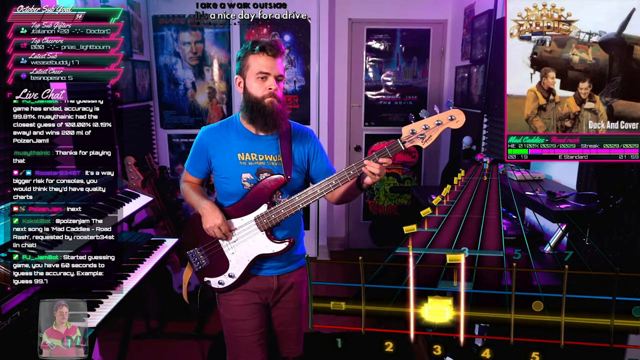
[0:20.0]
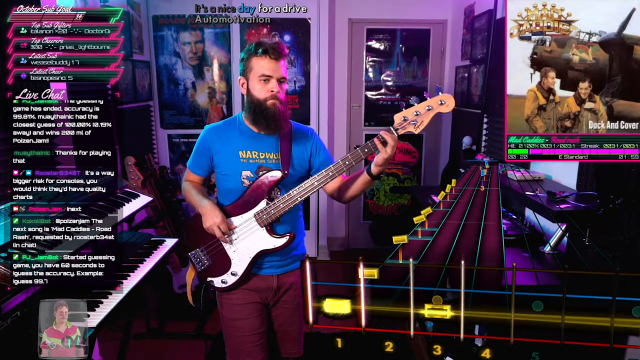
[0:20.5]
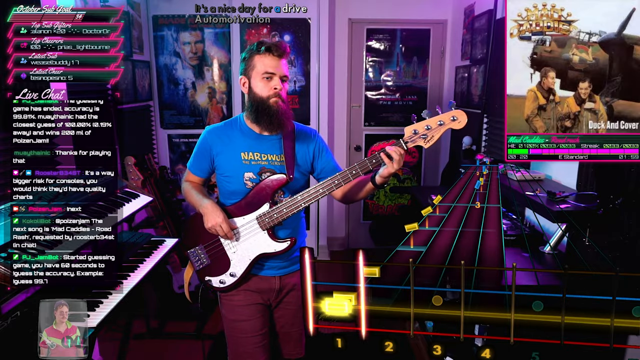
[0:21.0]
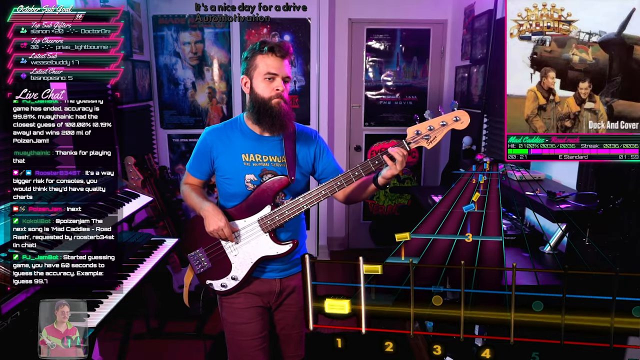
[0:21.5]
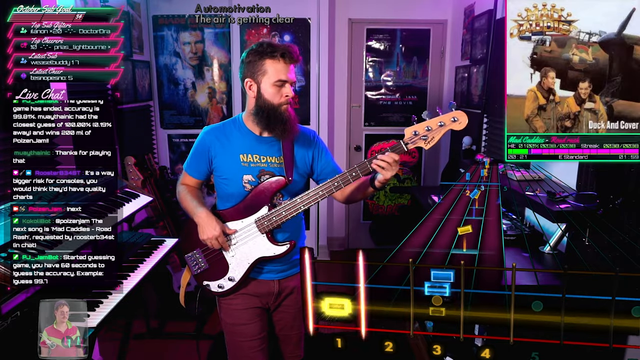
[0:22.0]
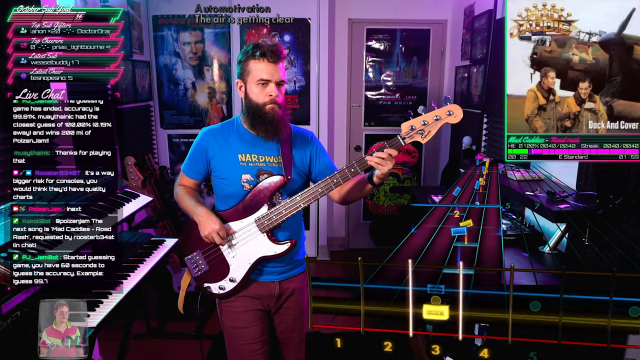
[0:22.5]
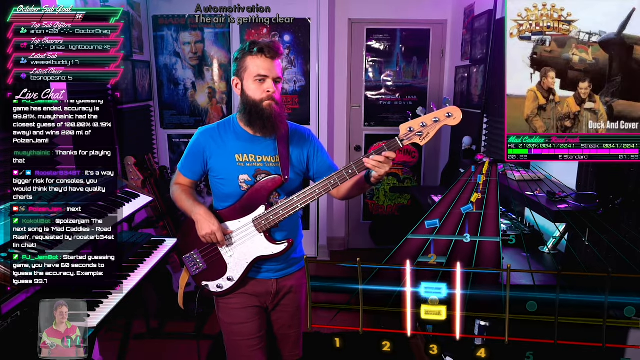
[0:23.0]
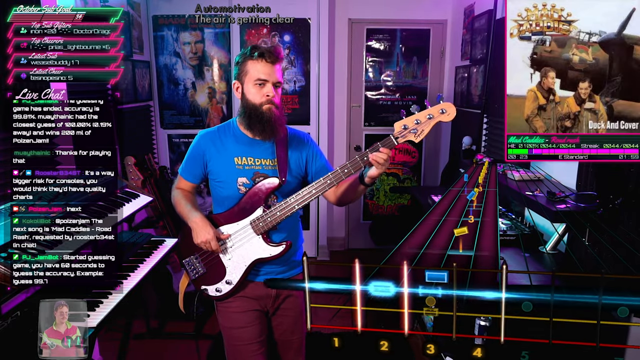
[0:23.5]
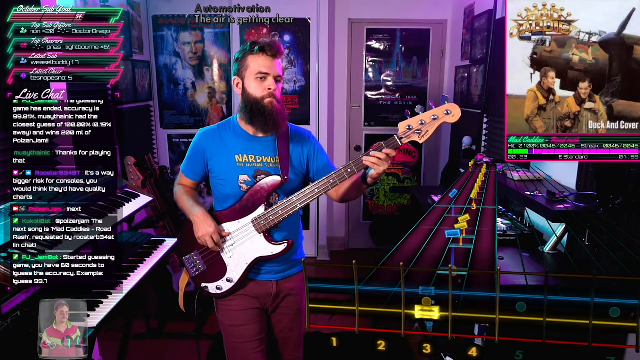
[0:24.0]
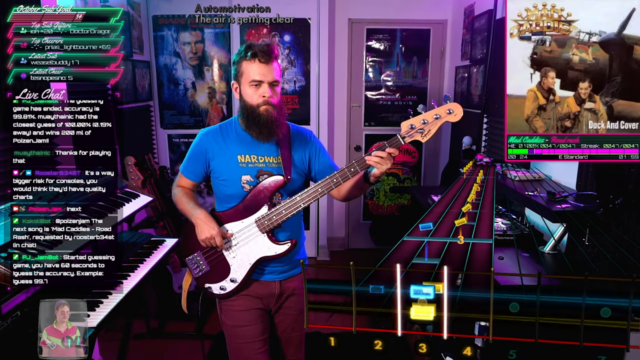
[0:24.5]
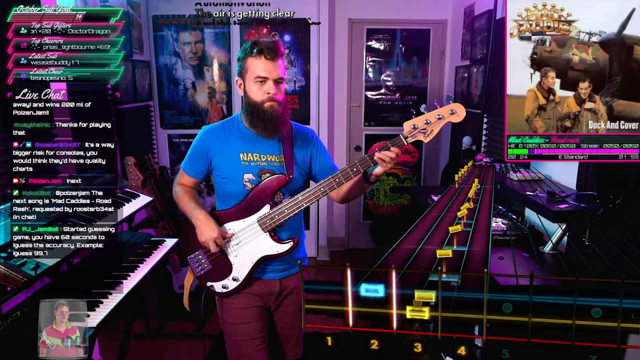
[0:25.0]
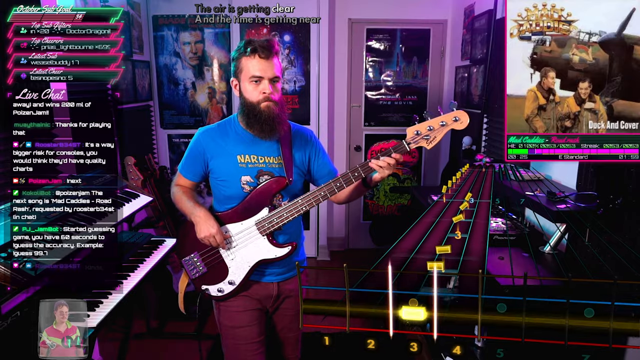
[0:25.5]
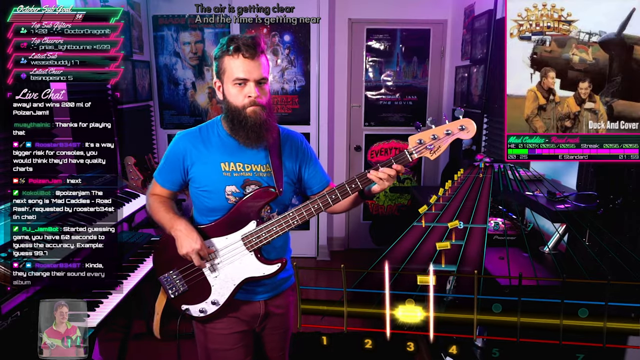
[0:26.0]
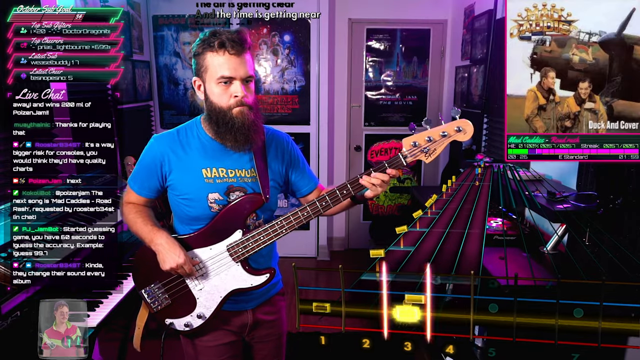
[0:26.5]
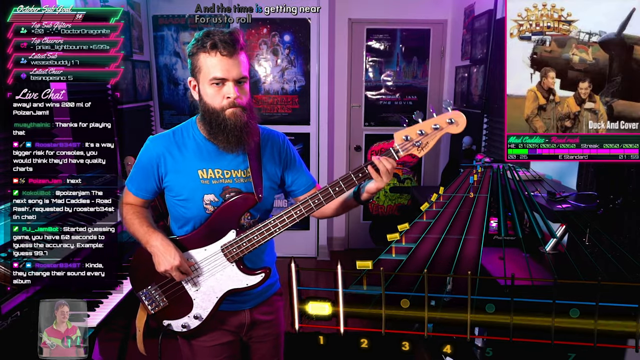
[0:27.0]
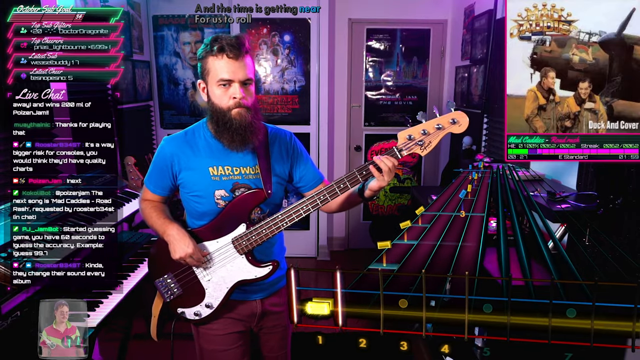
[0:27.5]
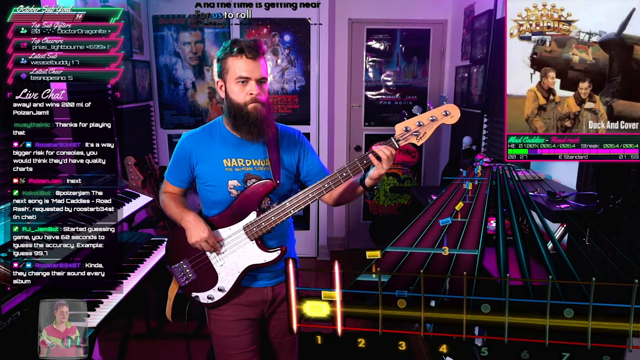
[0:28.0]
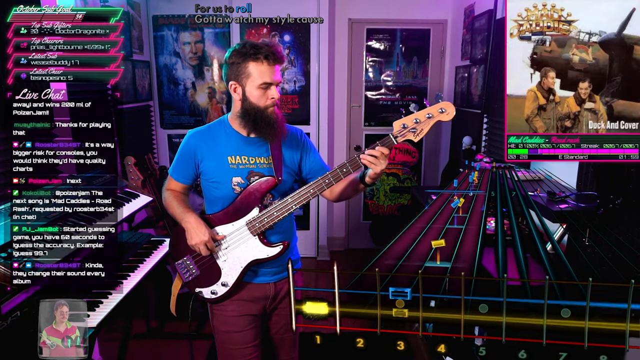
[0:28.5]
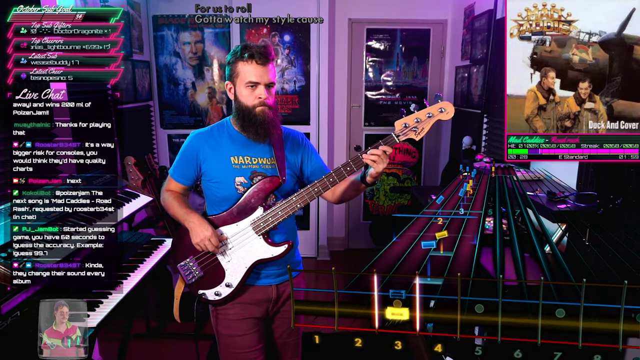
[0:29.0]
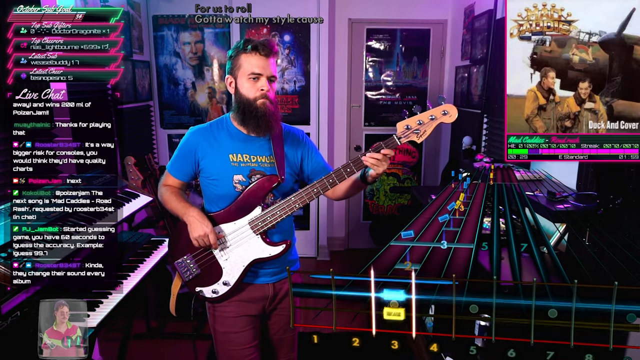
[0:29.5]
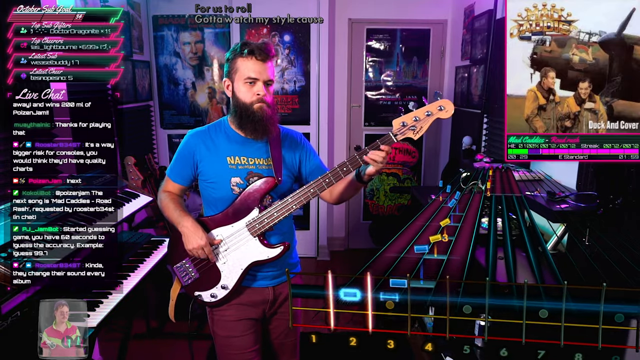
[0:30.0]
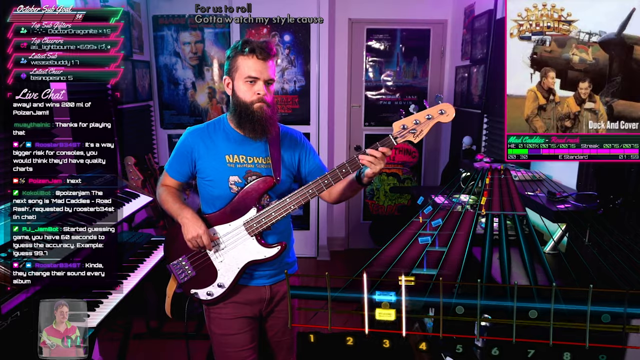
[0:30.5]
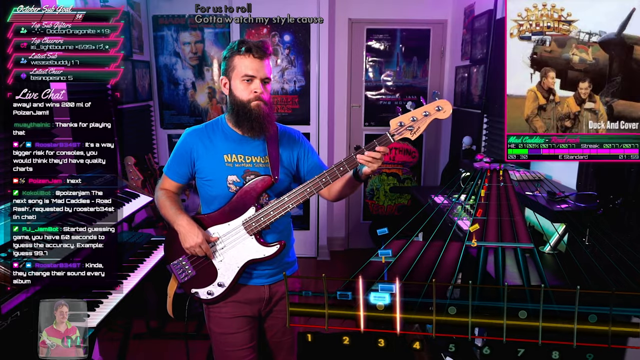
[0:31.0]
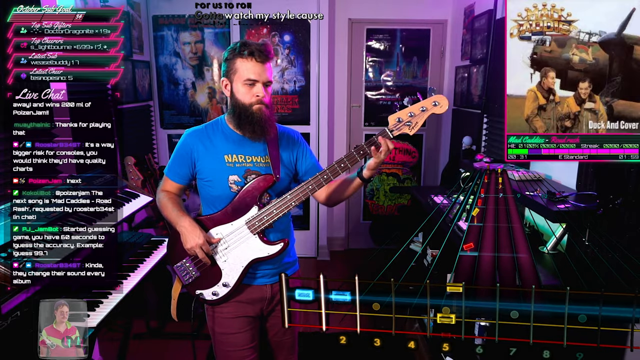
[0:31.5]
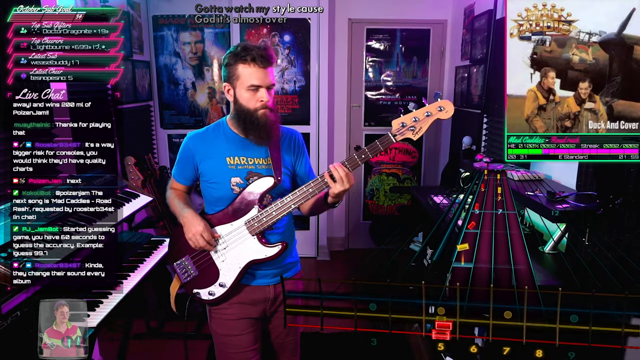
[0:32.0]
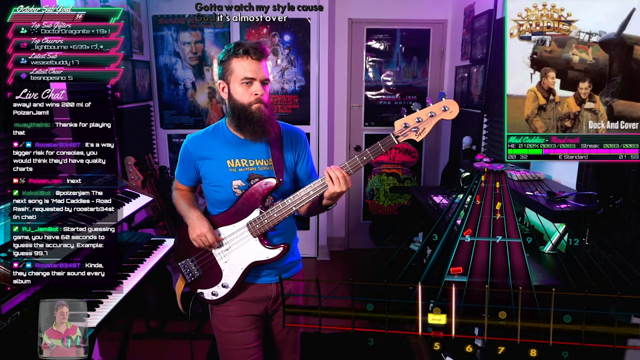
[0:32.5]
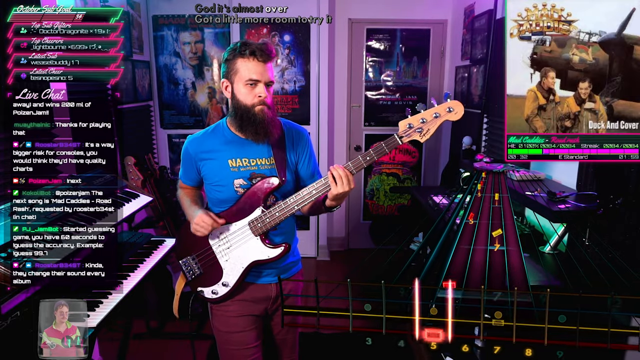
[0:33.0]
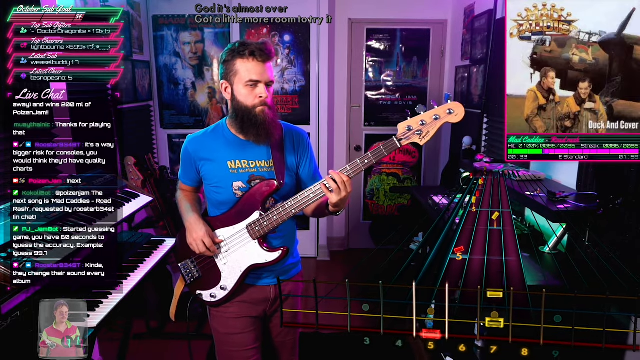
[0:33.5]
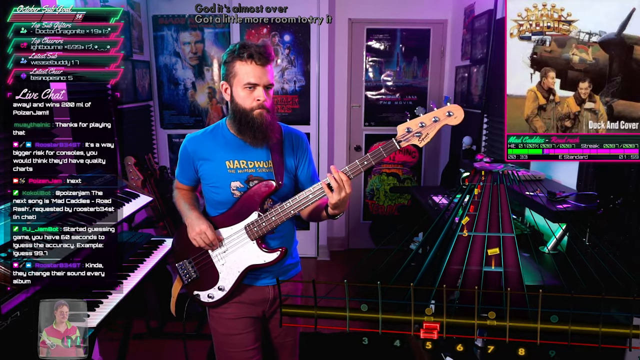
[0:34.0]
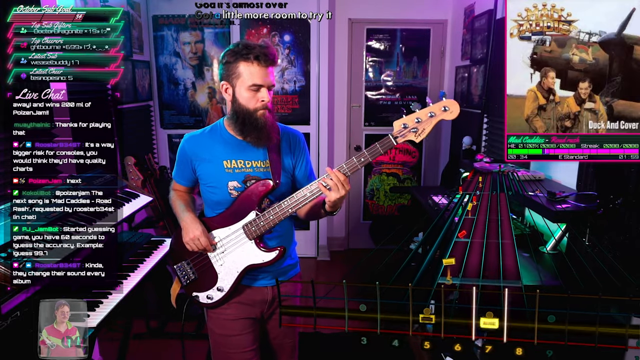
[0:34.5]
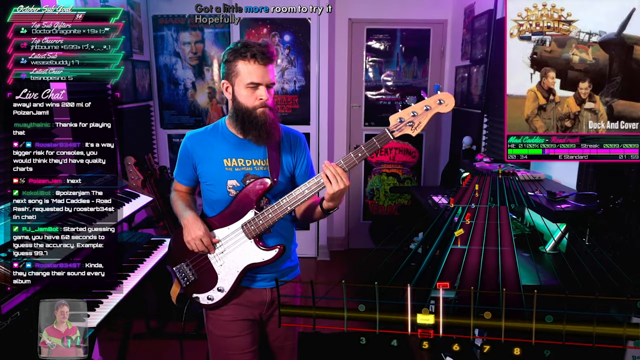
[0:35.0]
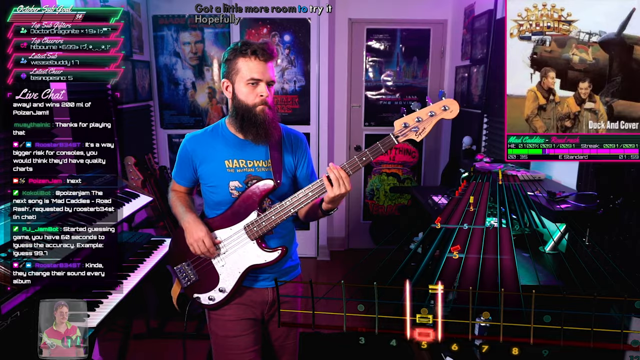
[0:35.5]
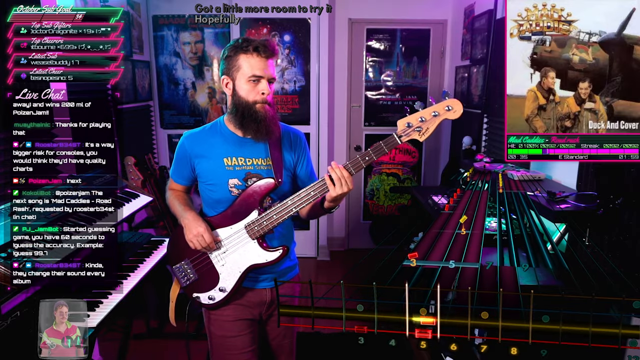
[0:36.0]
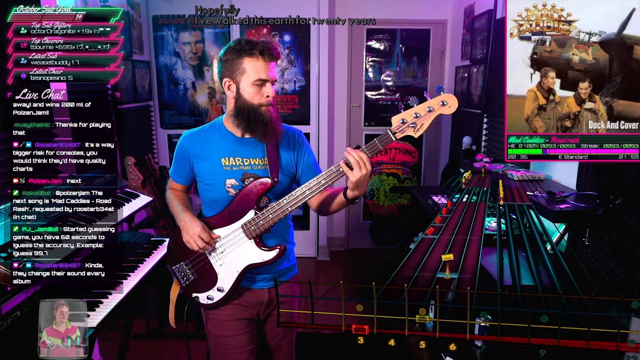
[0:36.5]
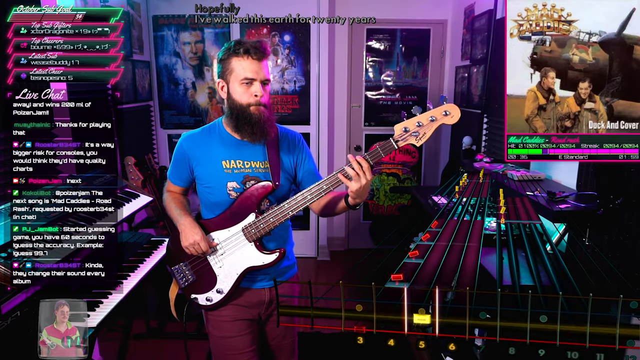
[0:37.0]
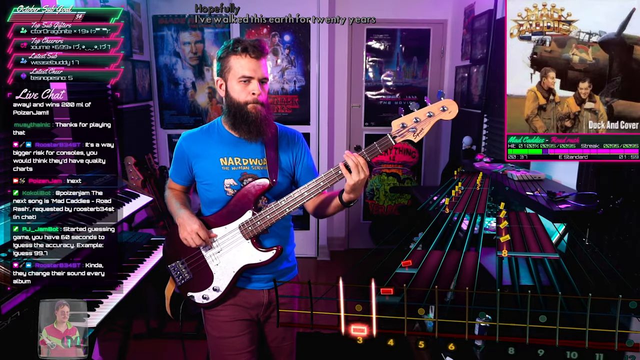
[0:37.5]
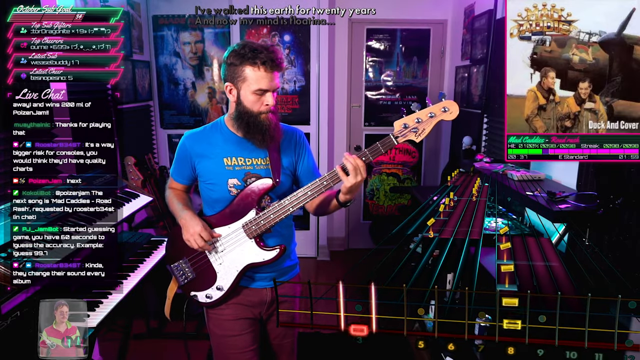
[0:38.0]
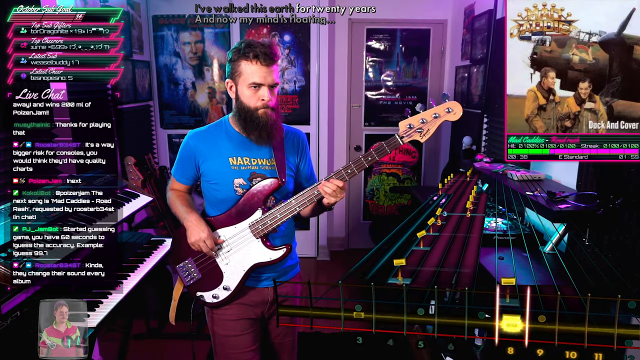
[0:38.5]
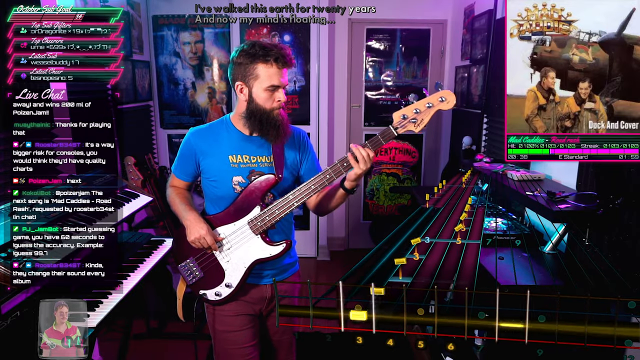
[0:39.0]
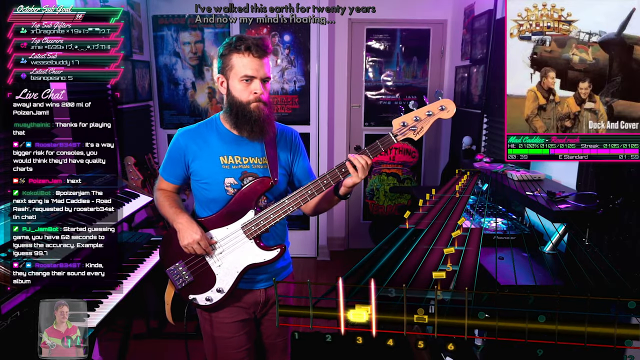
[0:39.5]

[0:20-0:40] The chats on the left-hand side of the screen continue, apparently talking about what he is playing and requesting different albums and other songs. He focuses on hitting the notes. On the right-hand side, an animation shows numbers and the key notes he is supposed to hit, which seems to indicate a Guitar Hero kind of game, though the guitar looks like a real one. He looks extremely passionate and focused. The song is the same as before, apparently from the Duck and Cover album, whose image appears to show two men wearing army gear with an army airplane behind them, along with a logo that looks like it reads "Caddies MAD."